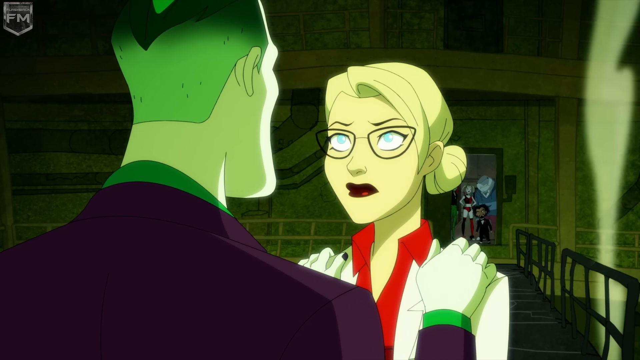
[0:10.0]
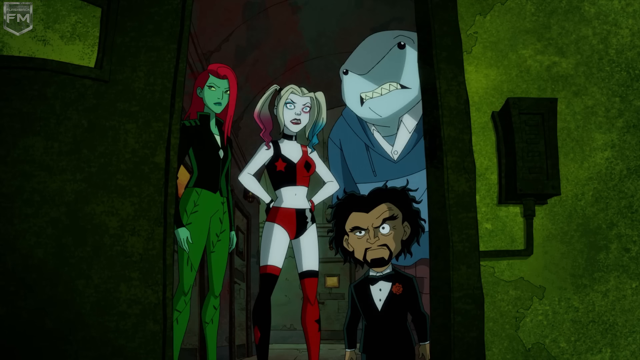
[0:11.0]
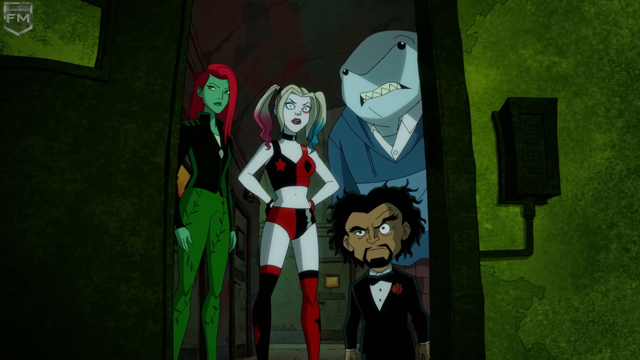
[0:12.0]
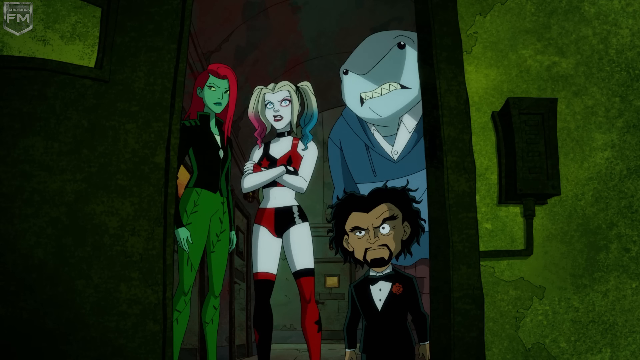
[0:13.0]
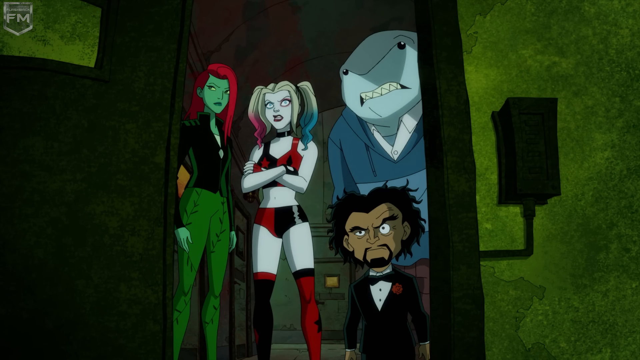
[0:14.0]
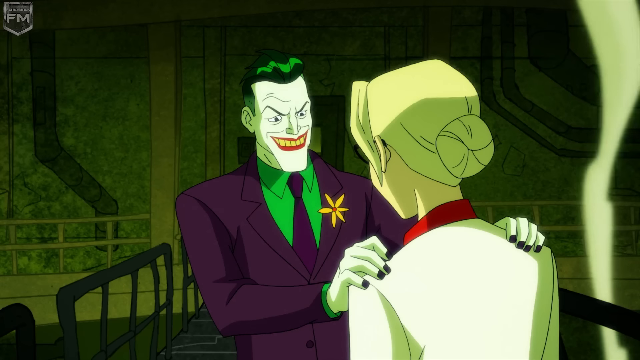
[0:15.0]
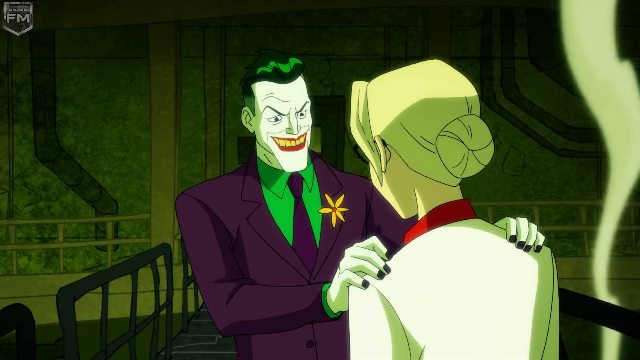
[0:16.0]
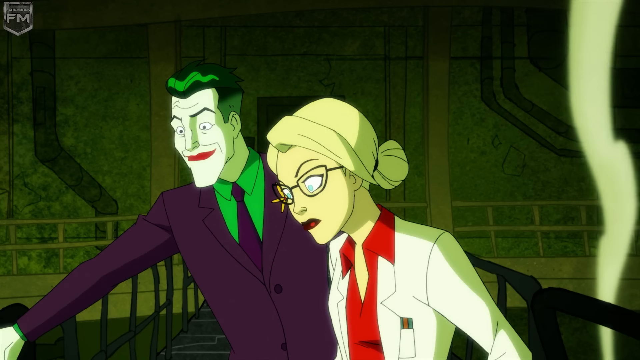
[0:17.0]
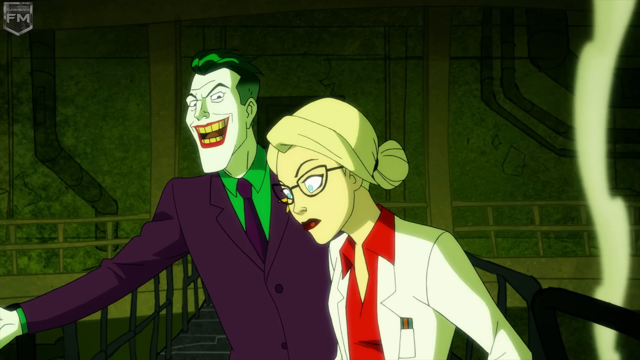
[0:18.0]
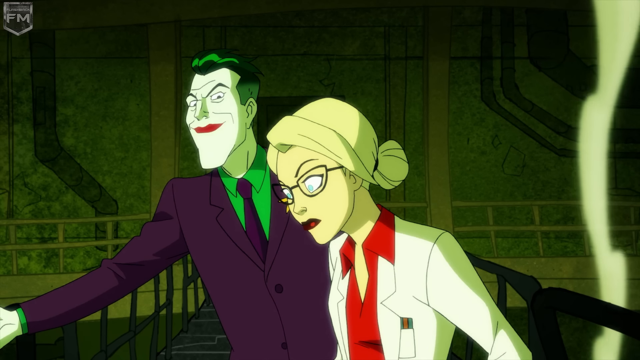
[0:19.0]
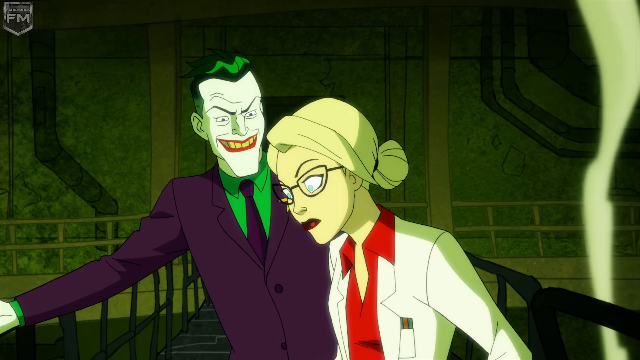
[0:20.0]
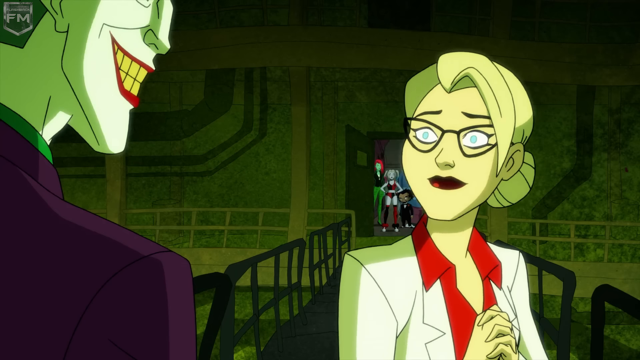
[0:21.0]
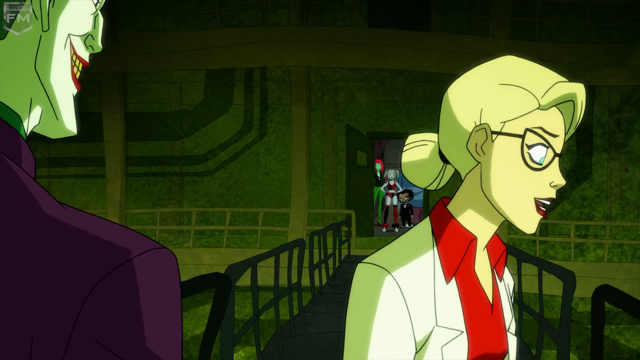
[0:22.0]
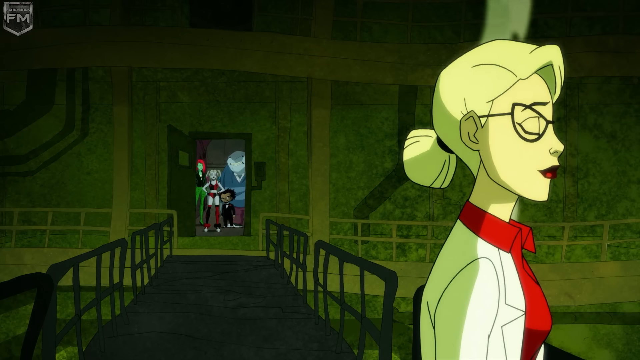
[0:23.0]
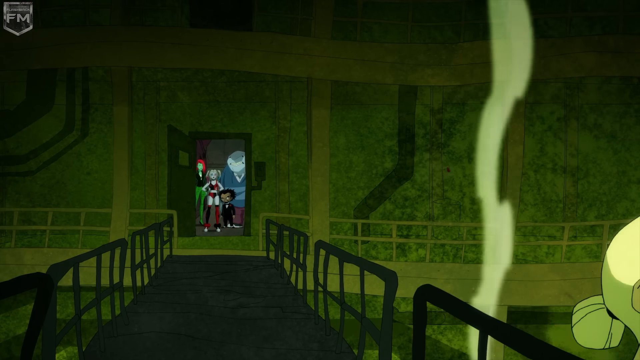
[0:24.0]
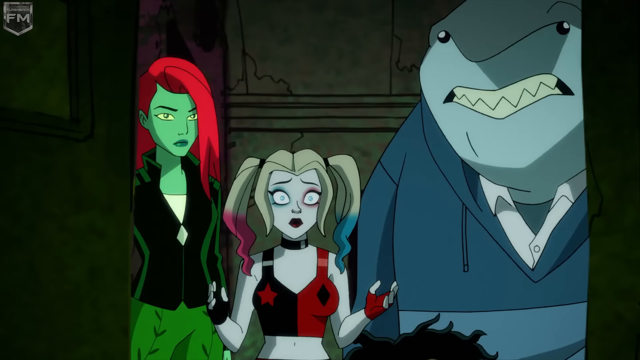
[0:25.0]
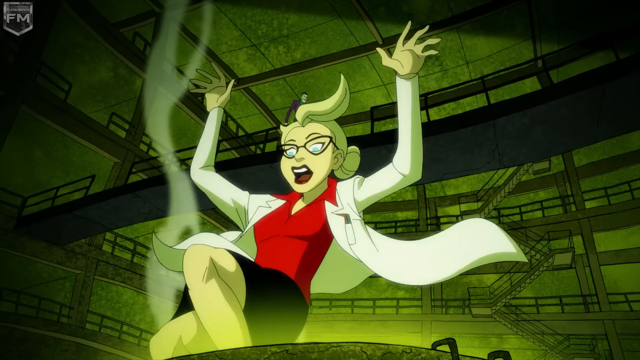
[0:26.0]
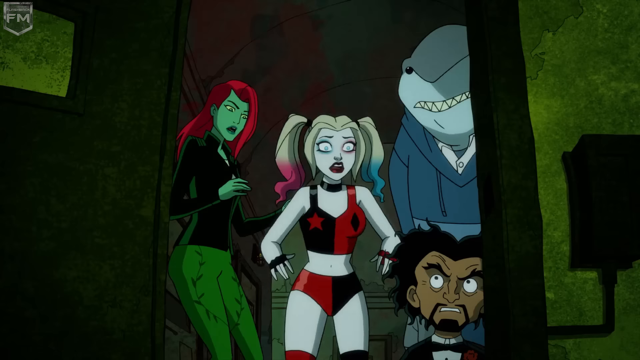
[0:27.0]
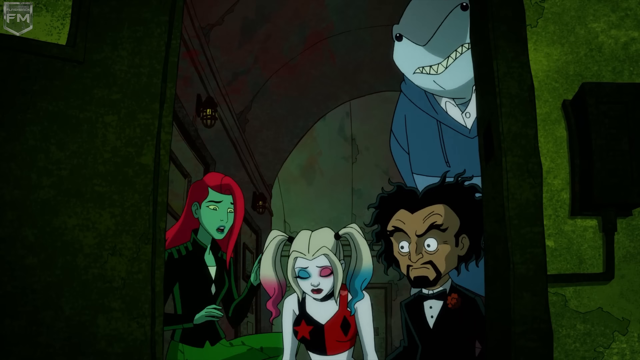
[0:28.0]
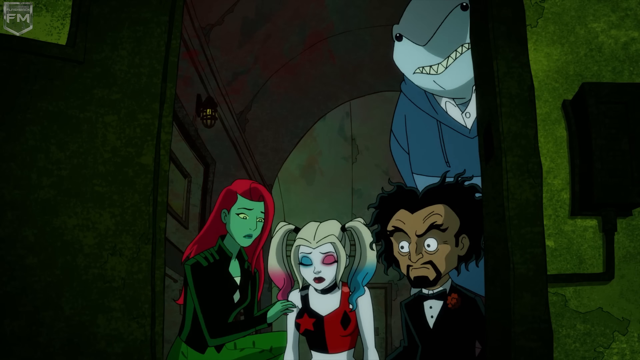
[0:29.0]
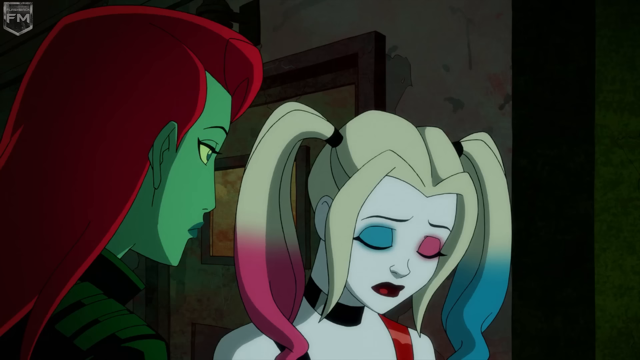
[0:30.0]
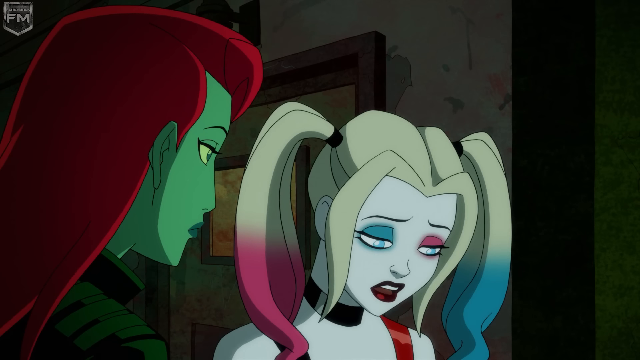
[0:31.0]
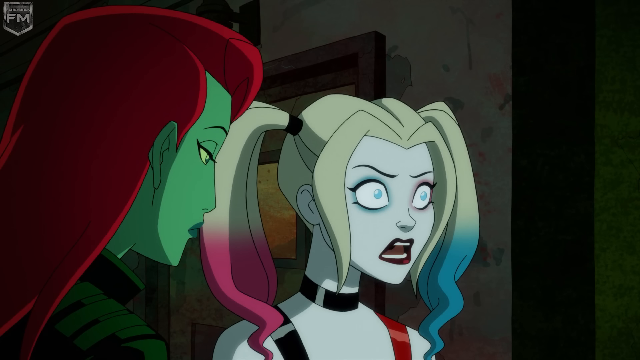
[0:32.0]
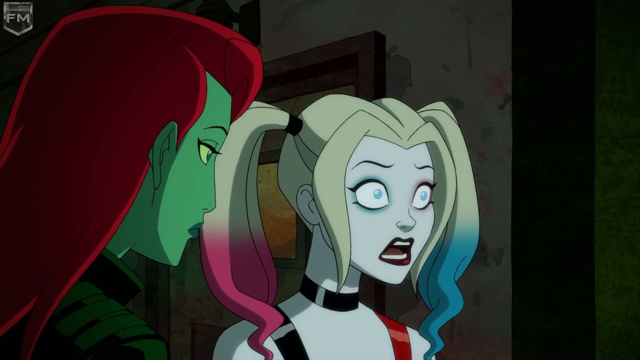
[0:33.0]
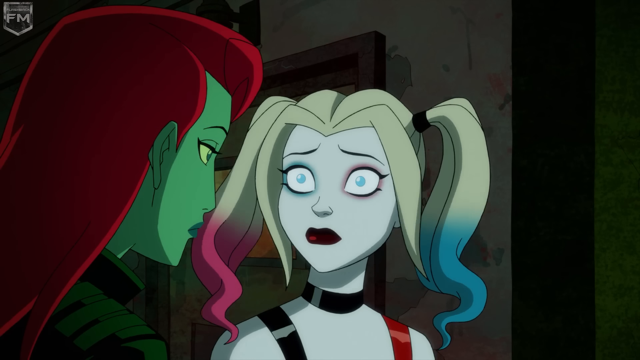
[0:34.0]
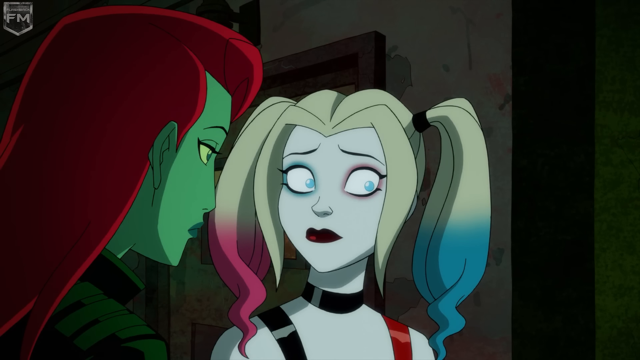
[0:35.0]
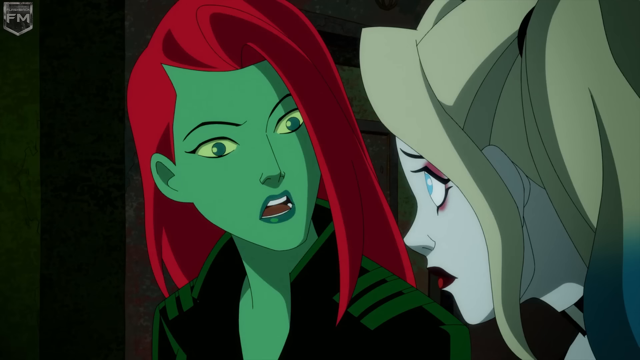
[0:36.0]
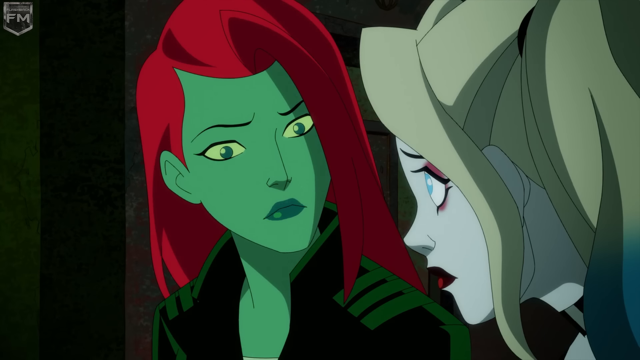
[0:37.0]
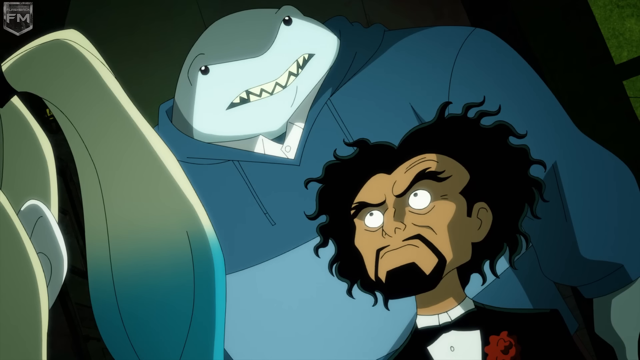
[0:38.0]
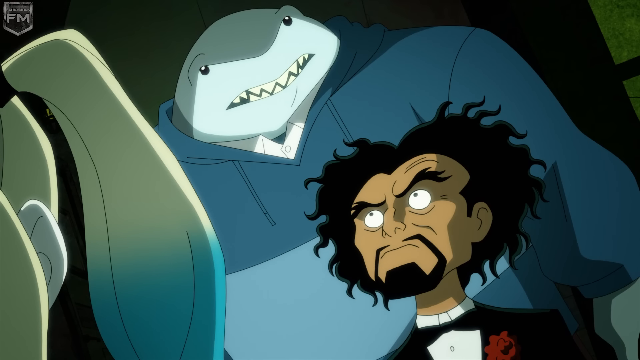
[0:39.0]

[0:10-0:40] The cartoon animation begins with a shot of four characters standing in a doorway: a short, brown-skinned male character wearing a suit with a bow tie; a large, tall, blue shark-like character; a woman with blonde pigtails wearing a crop top and bikini-style bottoms; and next to her, a woman with red hair and green skin. They all look outwards in the same direction. The scene changes to show two characters. A man with green hair and a purple suit, very white skin and a large mouth with yellow teeth, who looks similar to the Joker character from comics, is talking to a woman with blonde hair in a white lab coat, his hands resting on her shoulders. They look down towards something below them. The woman then turns and appears to leap off the edge of a walkway into a large tub of green liquid. The four characters at the doorway fall down to the ground in despair.